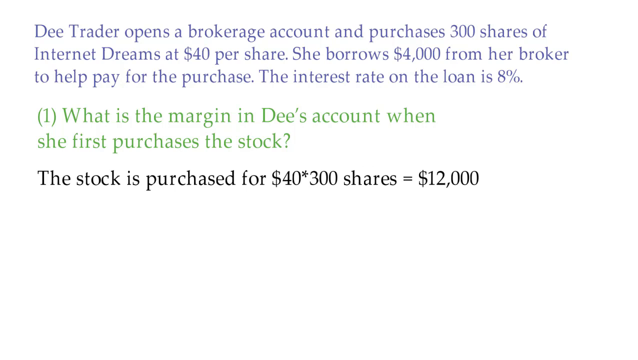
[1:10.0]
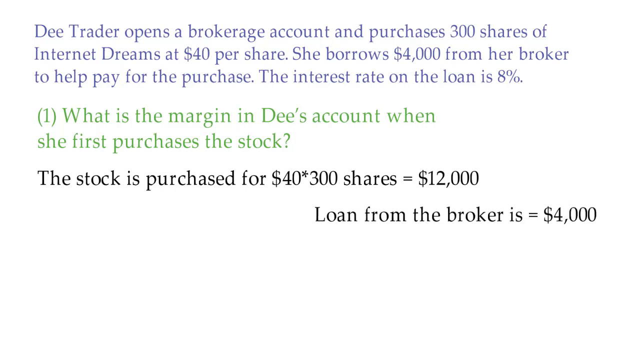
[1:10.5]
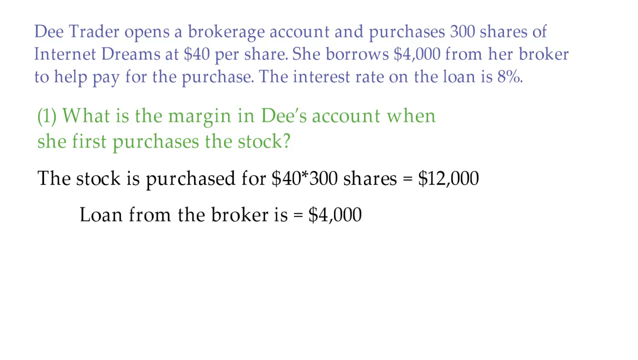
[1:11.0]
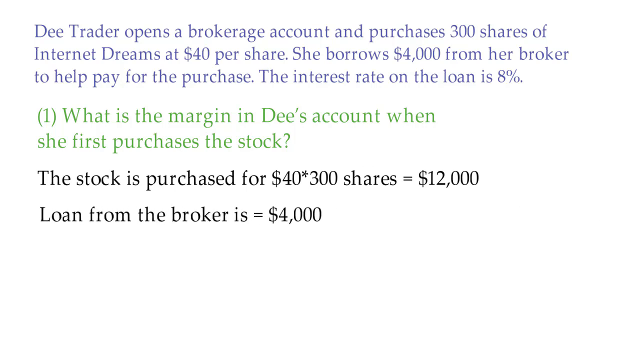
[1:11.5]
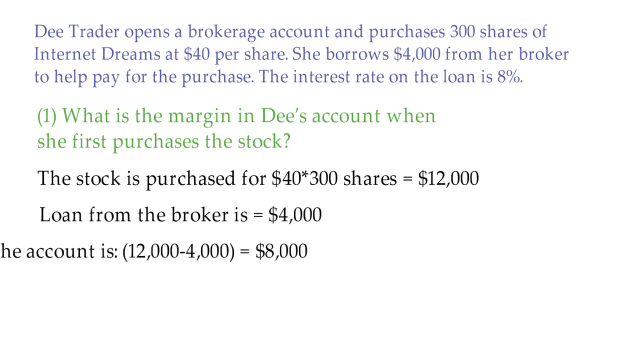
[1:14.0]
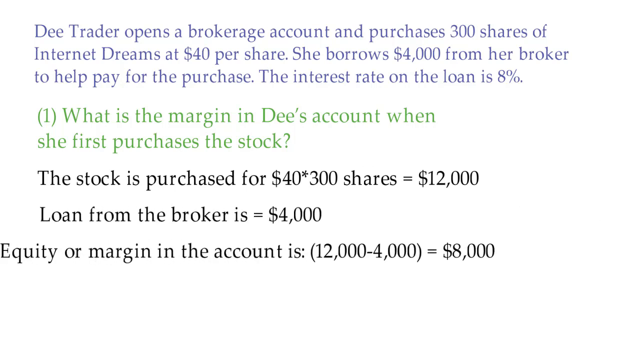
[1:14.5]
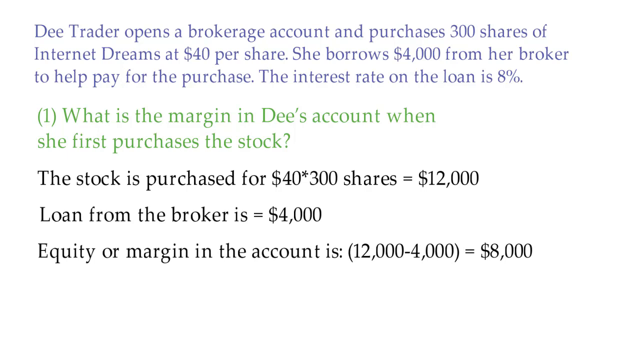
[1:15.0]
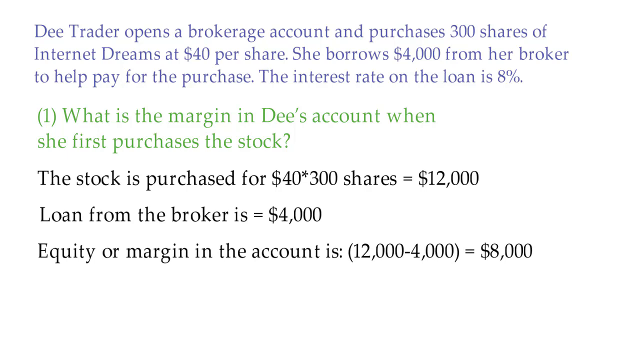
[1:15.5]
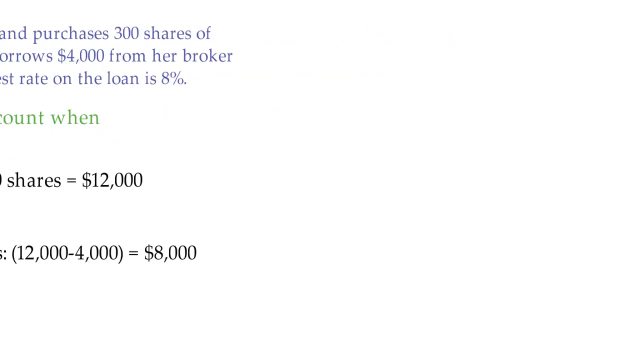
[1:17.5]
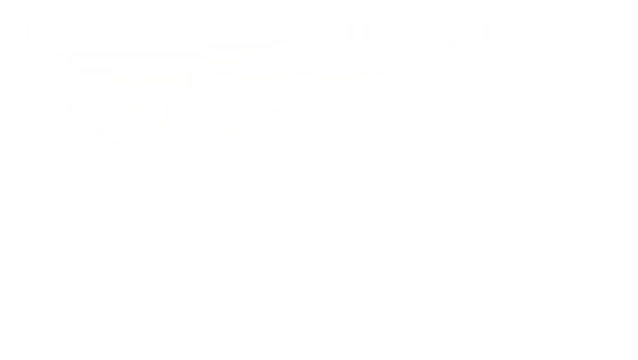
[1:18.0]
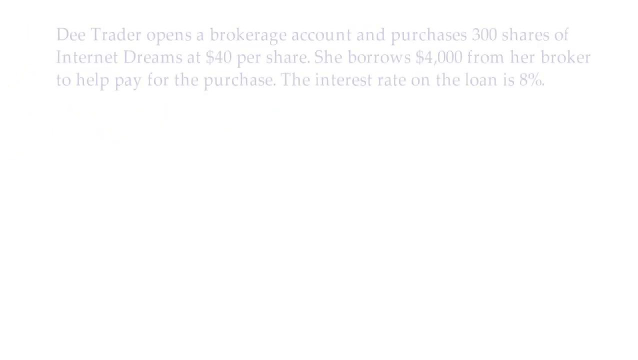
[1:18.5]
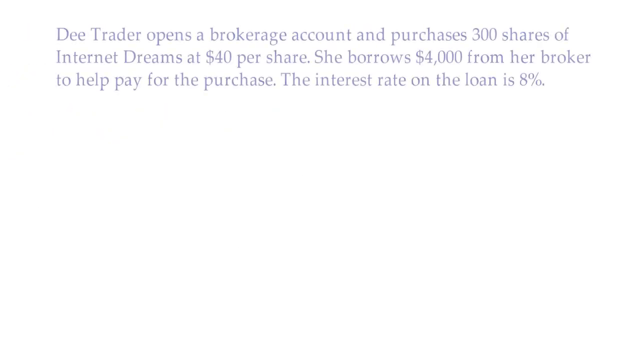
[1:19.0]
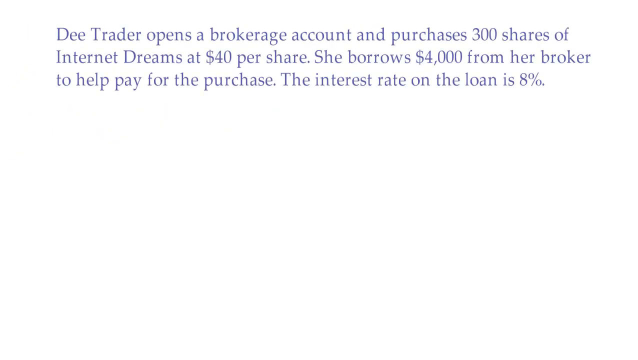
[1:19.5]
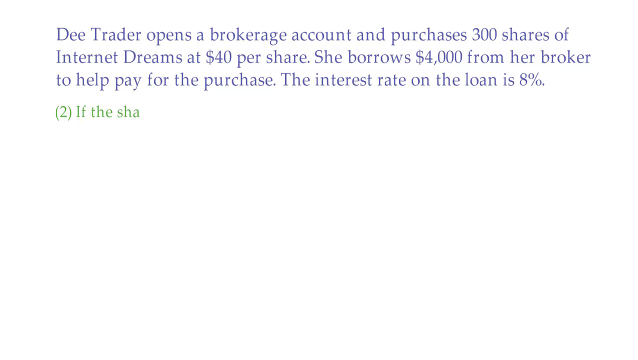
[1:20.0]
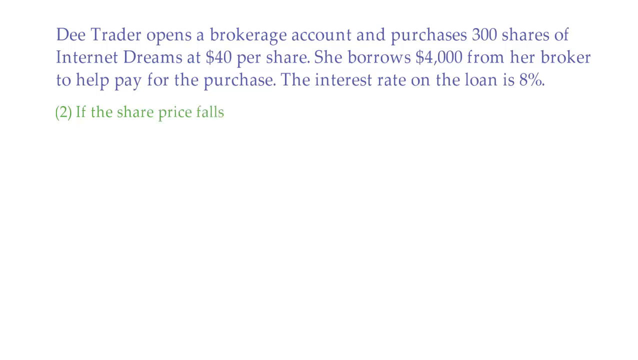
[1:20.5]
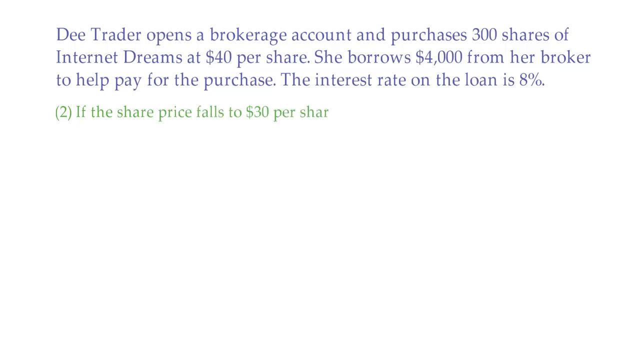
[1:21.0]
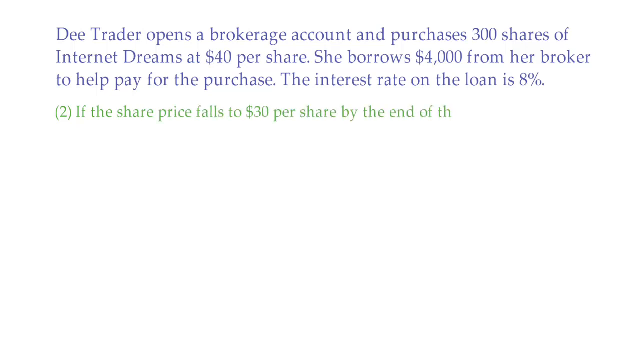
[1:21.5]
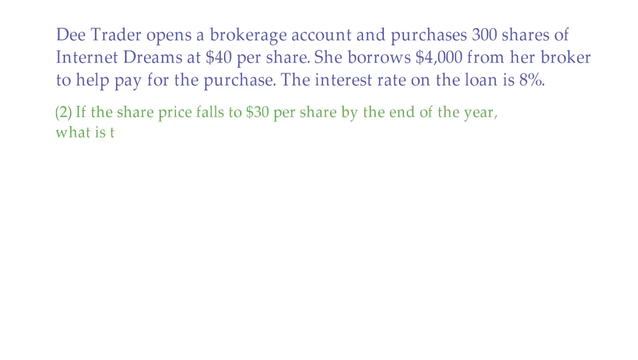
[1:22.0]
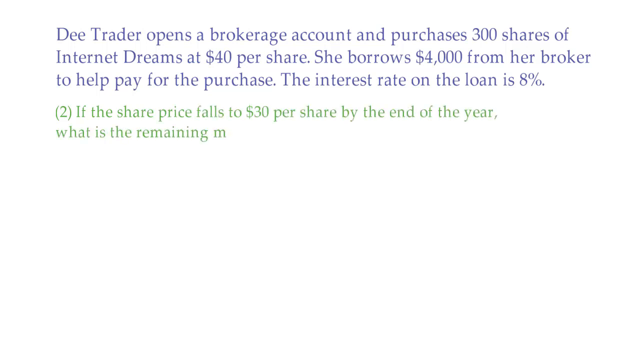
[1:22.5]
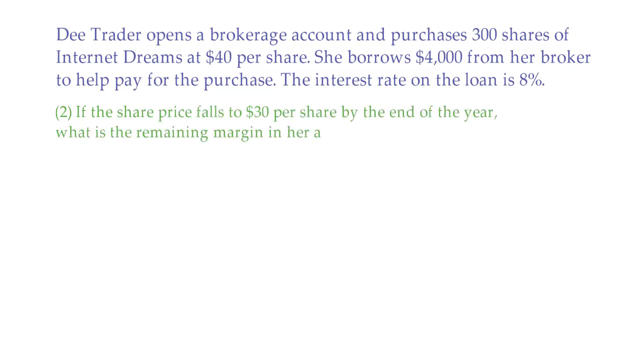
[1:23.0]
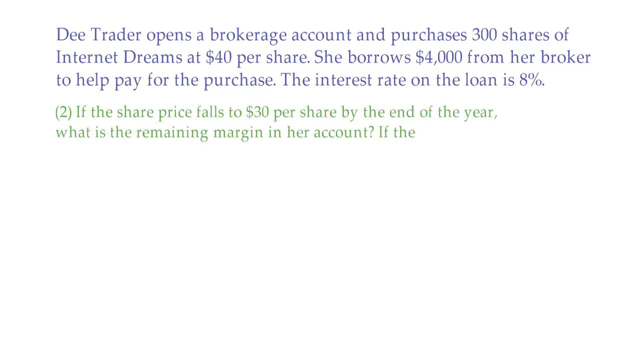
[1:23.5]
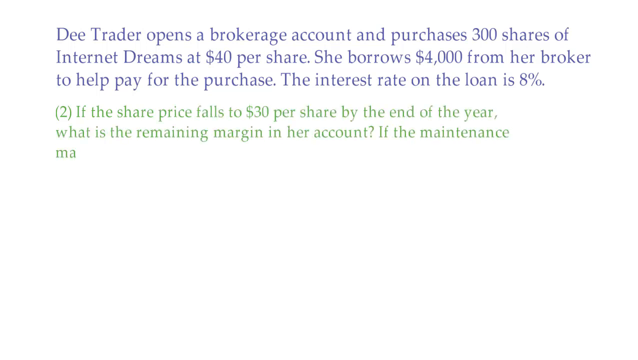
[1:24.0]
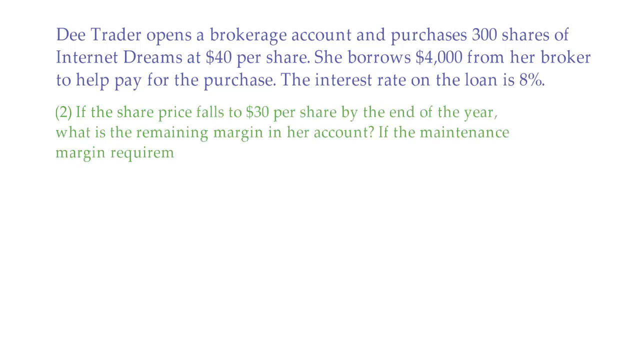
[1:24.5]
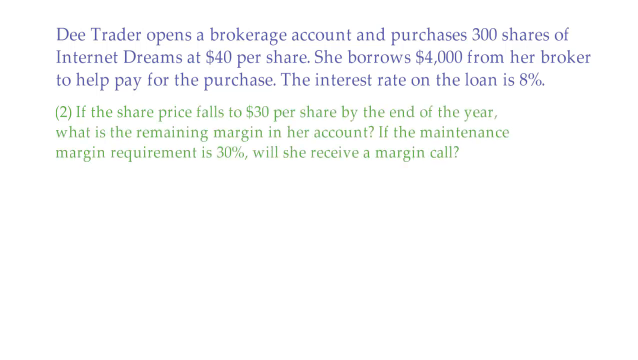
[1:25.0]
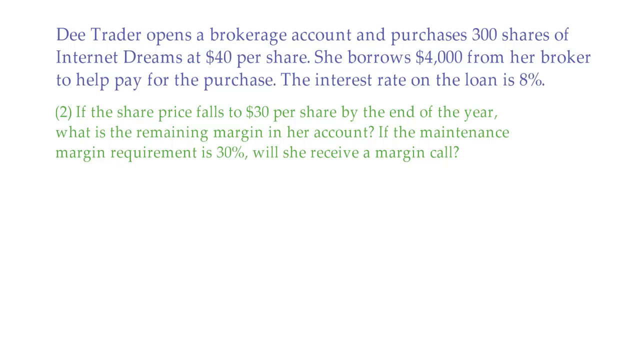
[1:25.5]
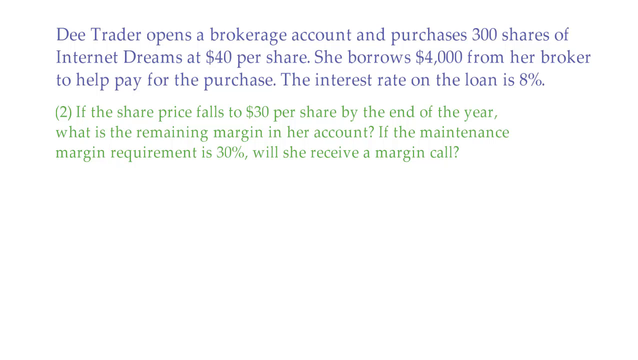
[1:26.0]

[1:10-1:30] The original word problem still appears in blue at the top of the screen as the first part of the problem continues. A black line of text appears: "Loan from the broker is equal to $4,000". Right underneath, another black line appears: "Equity or margin in the account is: (12,000-4,000)= $8,000". The video then moves on to step two, labeled in green text: "(2) if the share price falls to $30 per share by the end of the year, what is the remaining margin in her account? If the maintenance margin requirement is 30%, will she receive a margin call?"